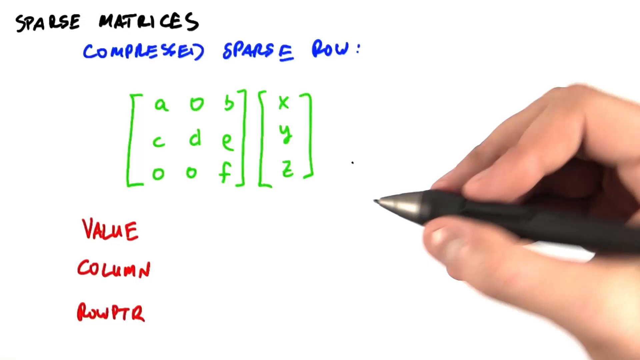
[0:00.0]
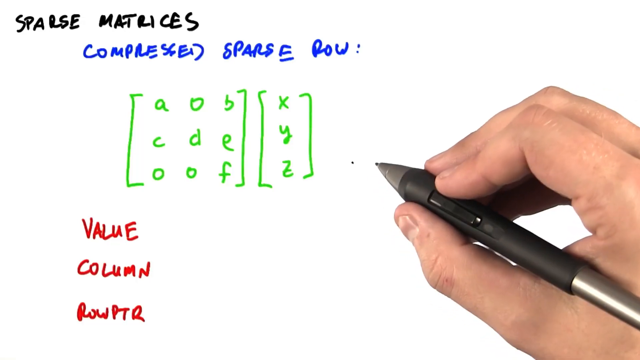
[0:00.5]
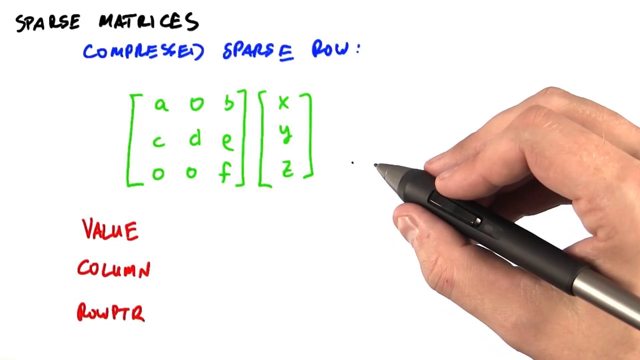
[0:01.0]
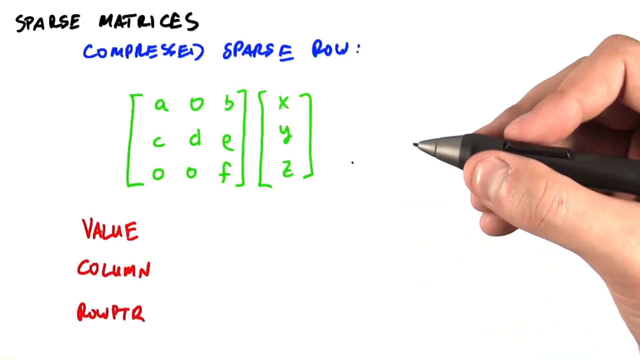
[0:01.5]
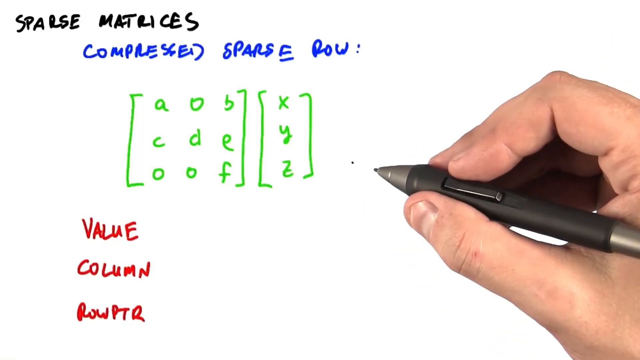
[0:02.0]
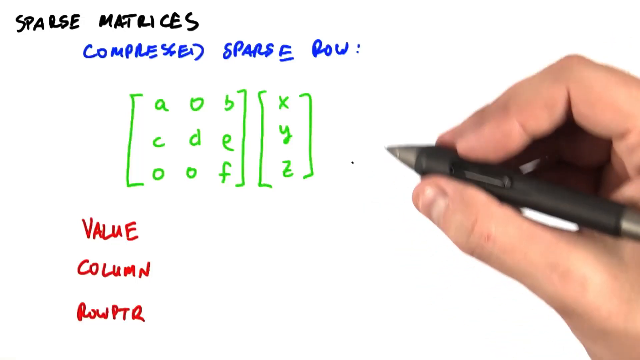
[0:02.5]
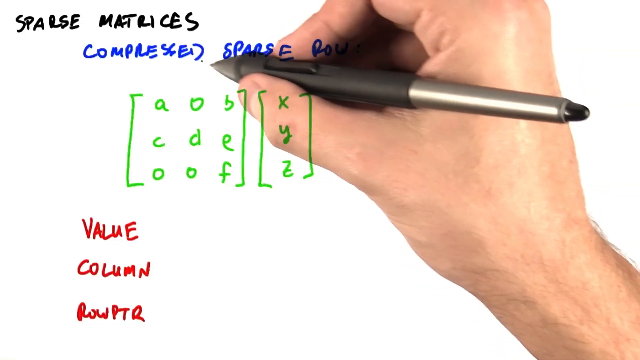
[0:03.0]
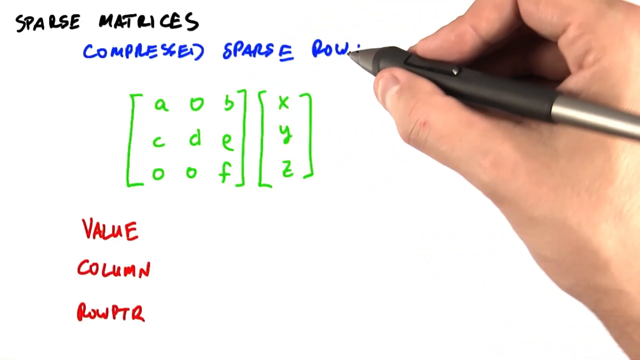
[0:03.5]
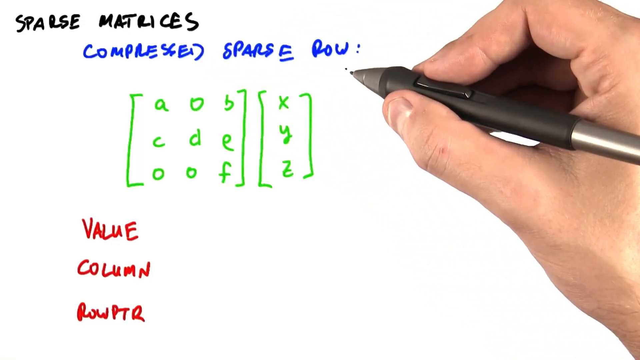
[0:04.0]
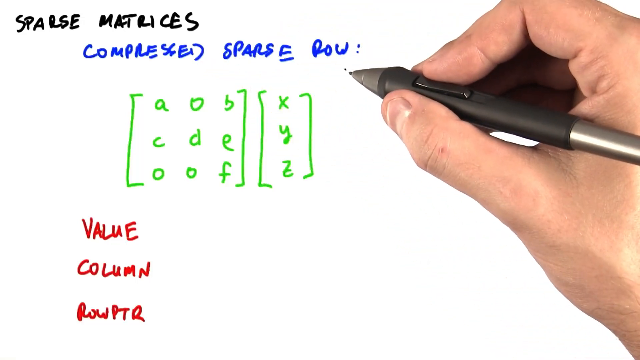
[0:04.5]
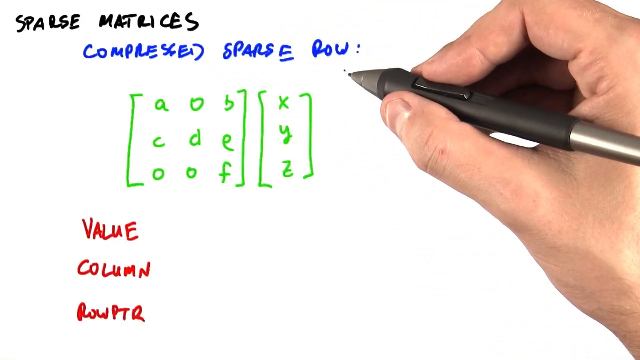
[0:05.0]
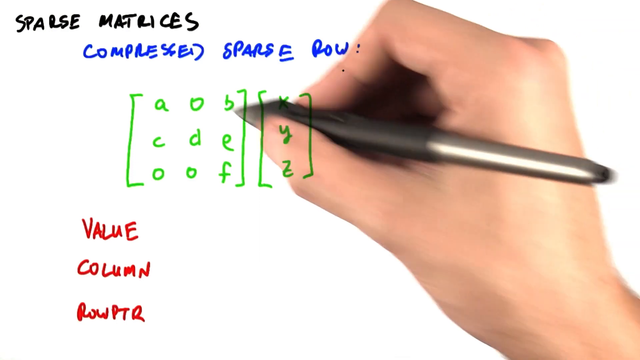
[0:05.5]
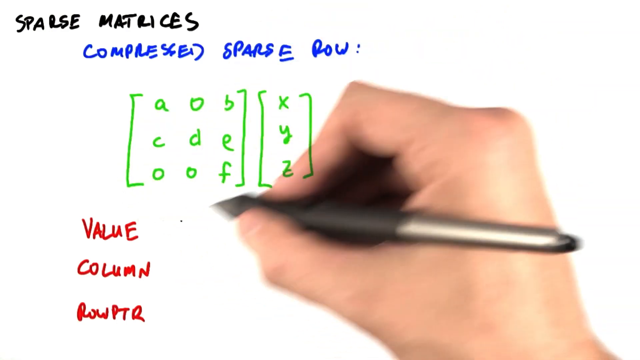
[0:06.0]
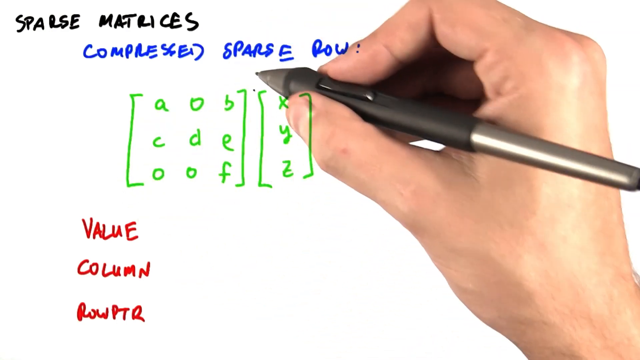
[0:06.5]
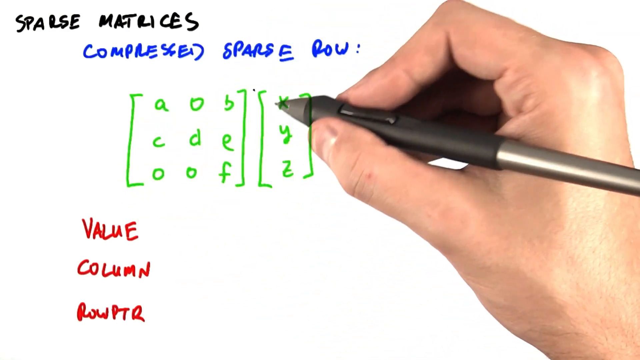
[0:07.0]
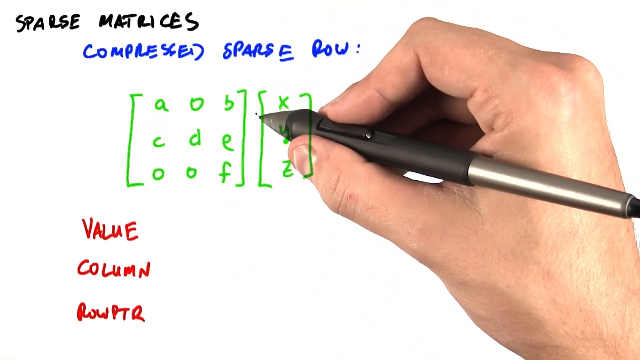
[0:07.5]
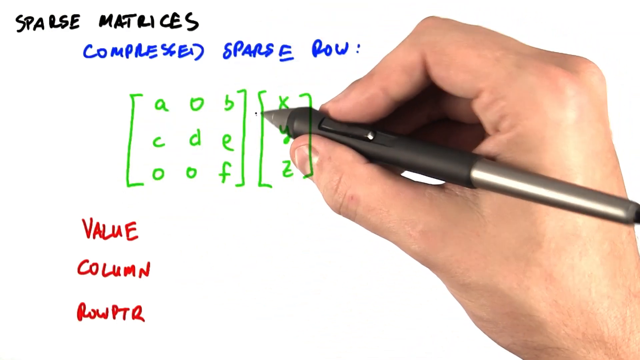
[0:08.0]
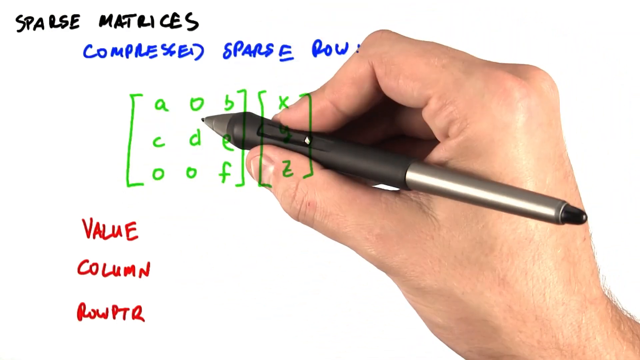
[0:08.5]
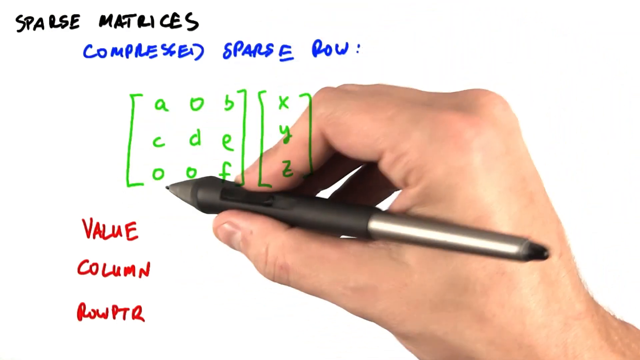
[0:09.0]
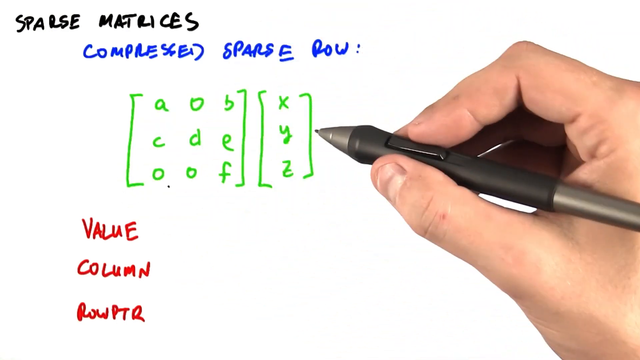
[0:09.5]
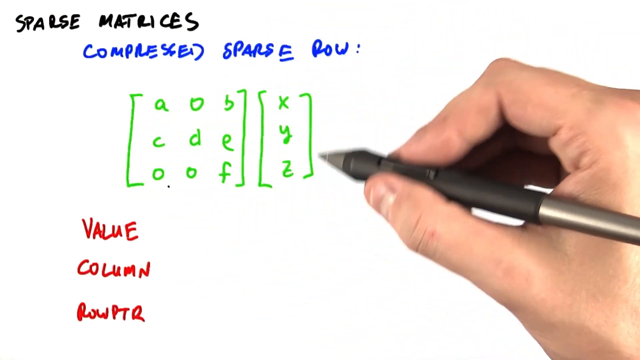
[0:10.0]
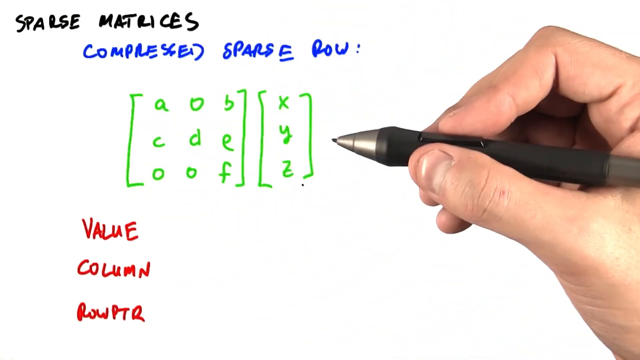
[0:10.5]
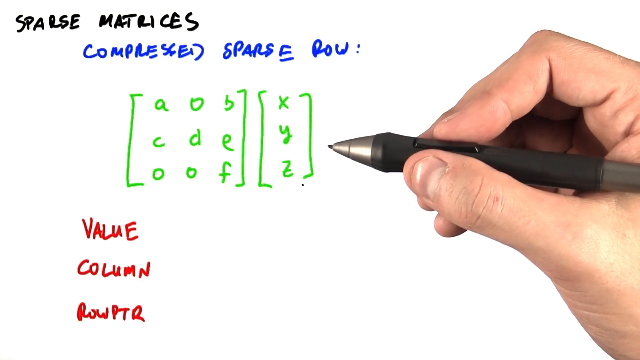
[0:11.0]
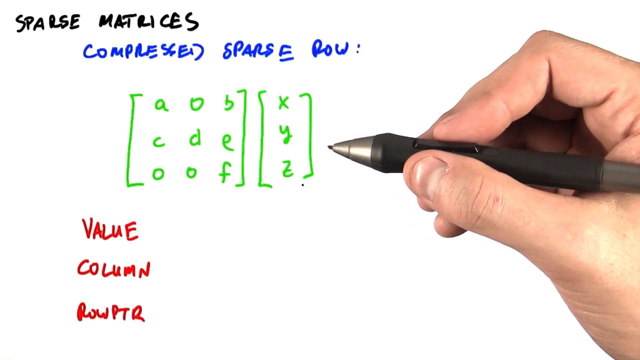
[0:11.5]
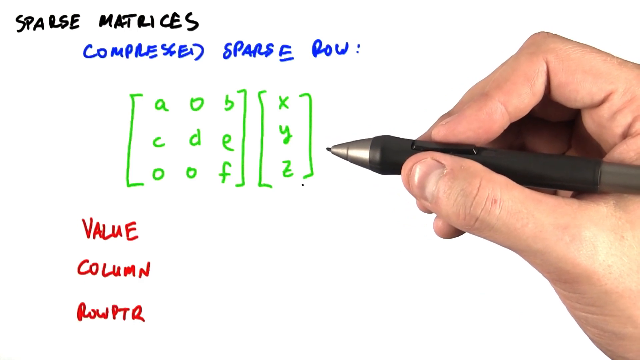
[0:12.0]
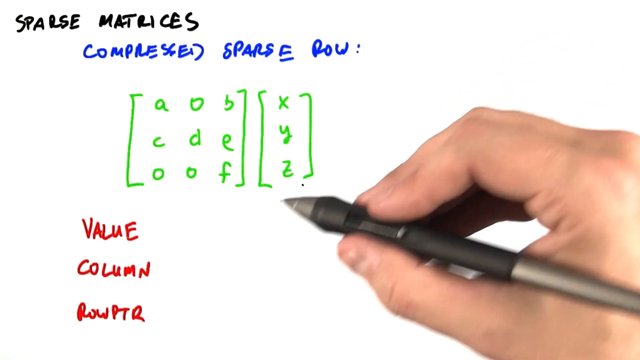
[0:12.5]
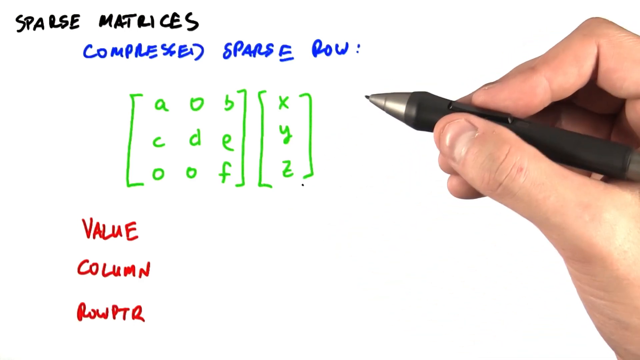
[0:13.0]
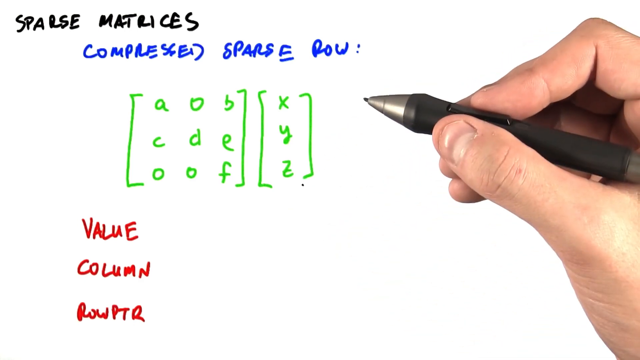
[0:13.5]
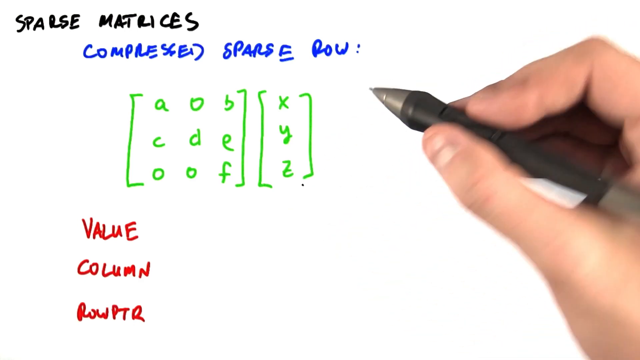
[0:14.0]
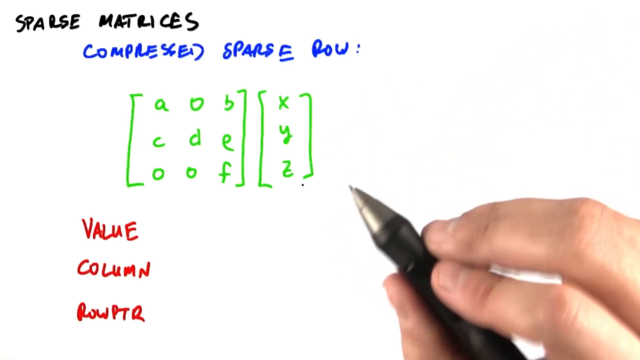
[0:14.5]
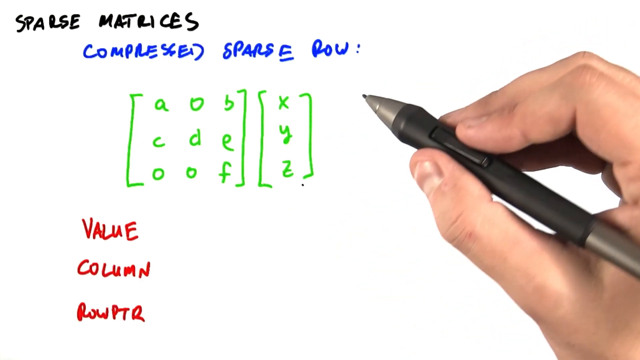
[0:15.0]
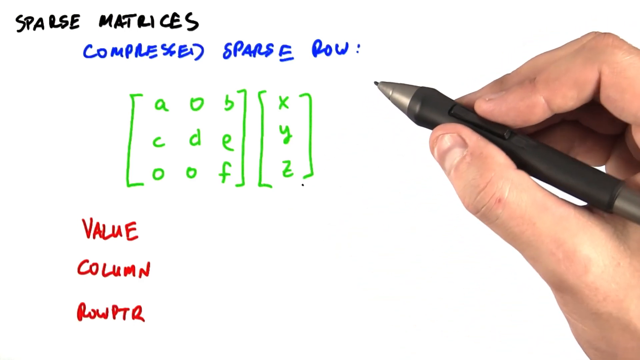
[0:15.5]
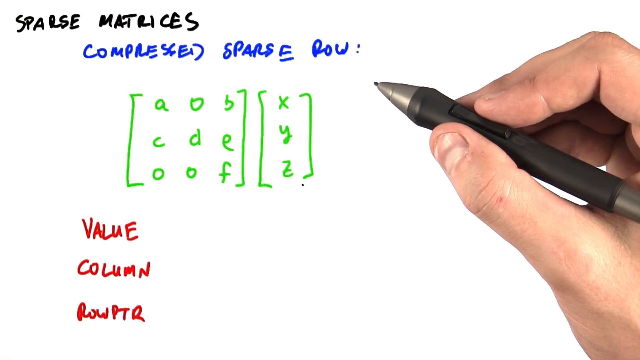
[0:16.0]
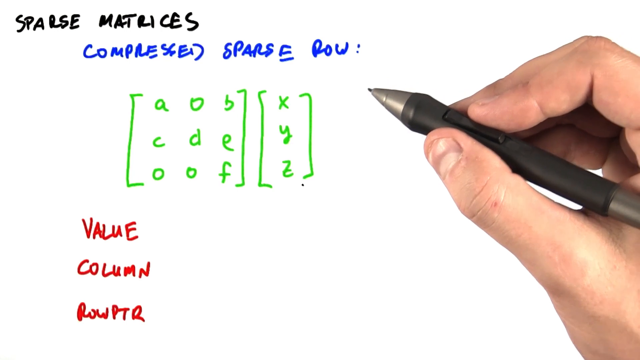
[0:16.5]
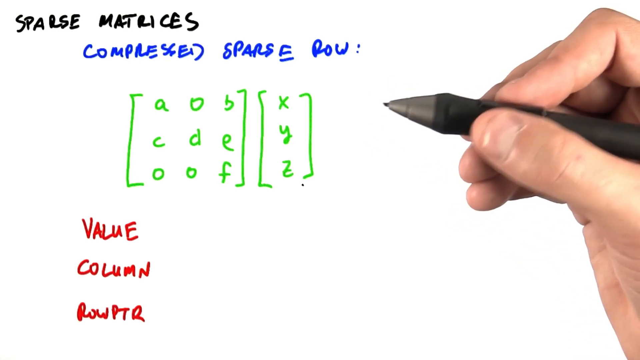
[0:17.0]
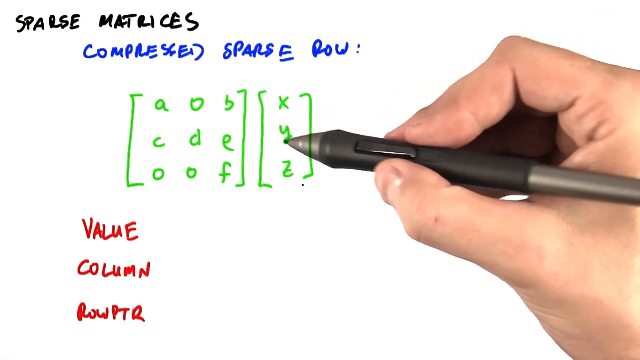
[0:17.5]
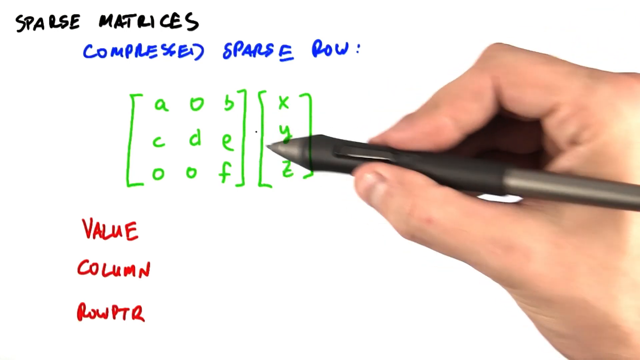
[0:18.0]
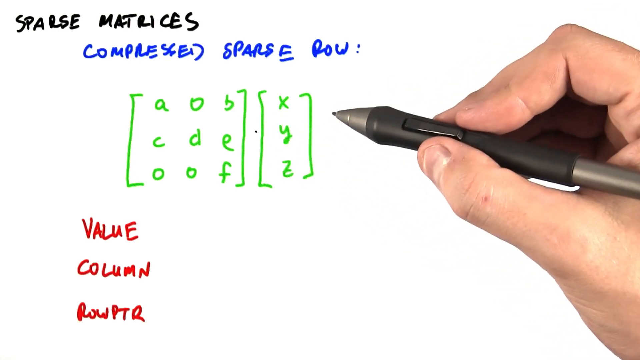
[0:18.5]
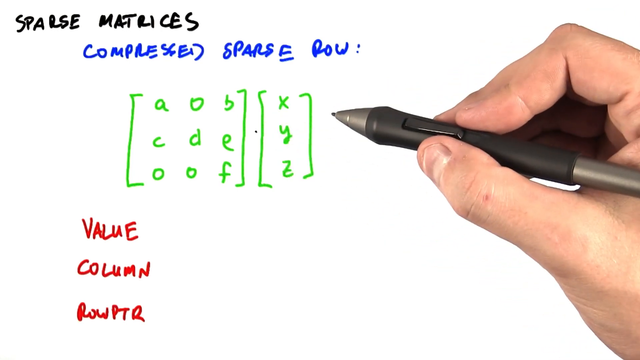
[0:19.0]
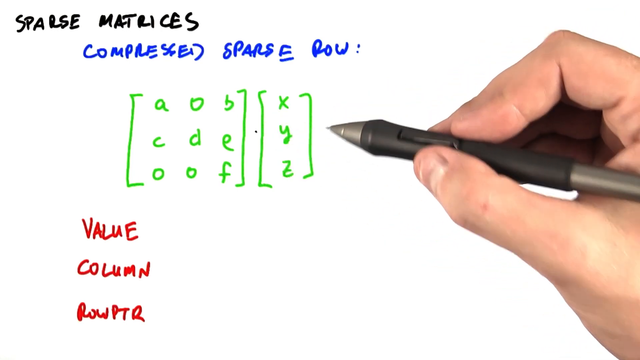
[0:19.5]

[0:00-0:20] A whiteboard is shown with a white hand holding a black pen that looks like a whiteboard pen. At the top, "sparse matrices" is written in black, and under it, in blue, "compressed sparse row". Below that are two vectors written in green. The bigger vector has a bigger square containing the letters A, C, O in the first column, O, D, O in the next column, and B, E, F in the last column, and then the vector is closed. The smaller vector has X, Y, Z, and is then closed. Below are "value", "column" and "row PTR", written in red. All the writing is bold and in capitals except for the green writing.